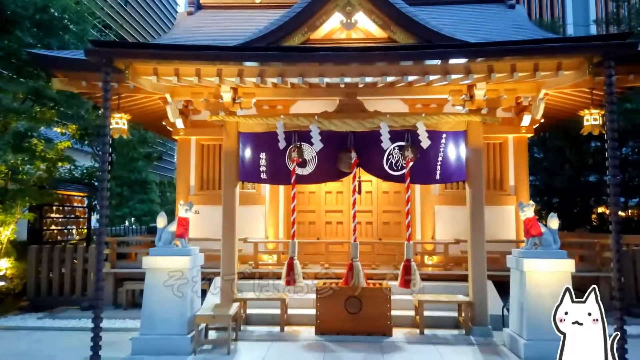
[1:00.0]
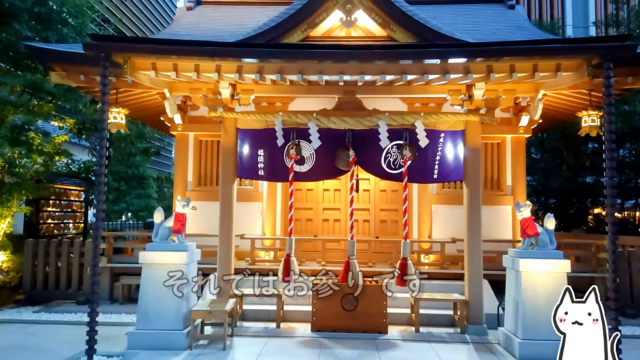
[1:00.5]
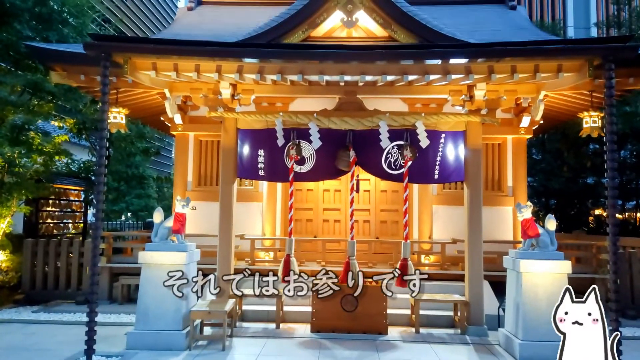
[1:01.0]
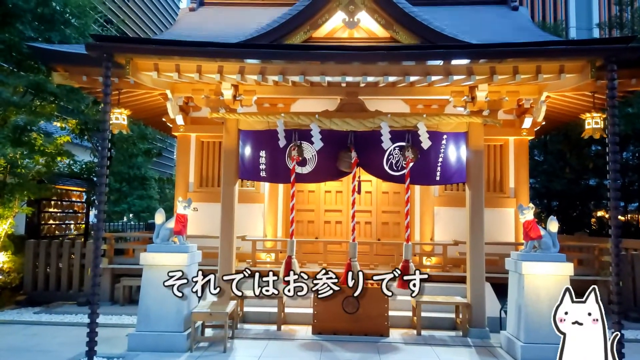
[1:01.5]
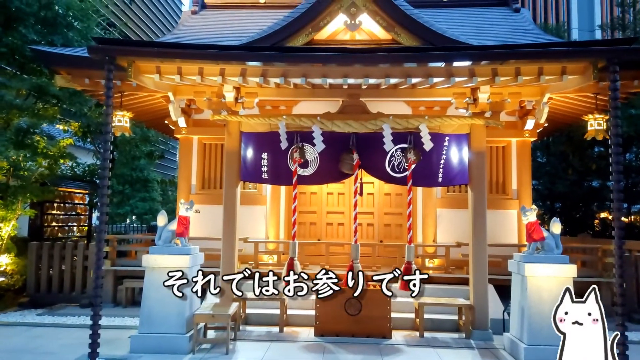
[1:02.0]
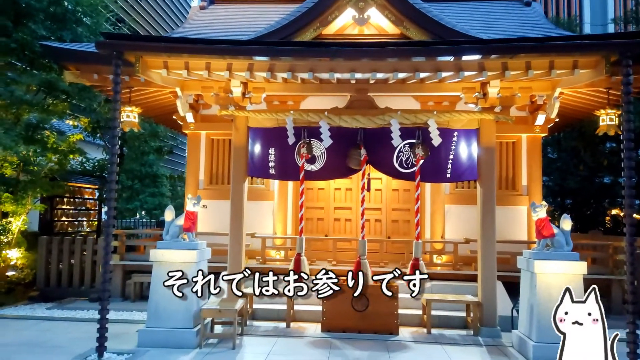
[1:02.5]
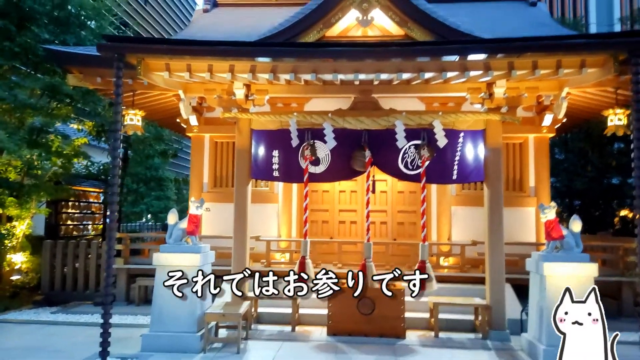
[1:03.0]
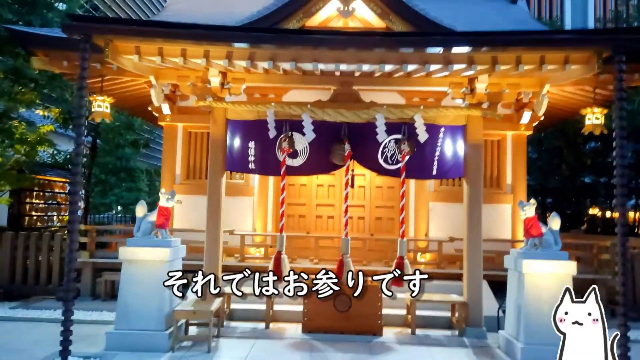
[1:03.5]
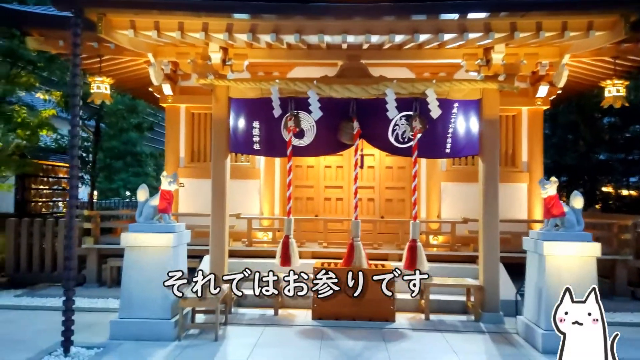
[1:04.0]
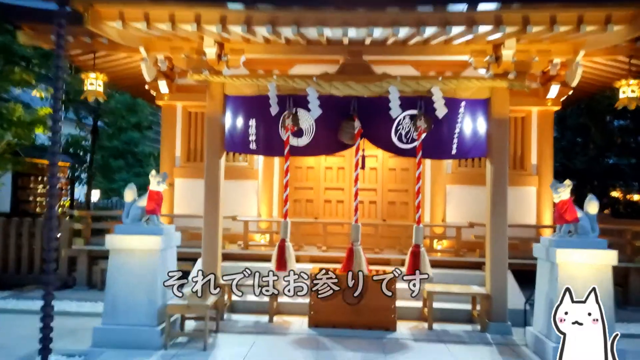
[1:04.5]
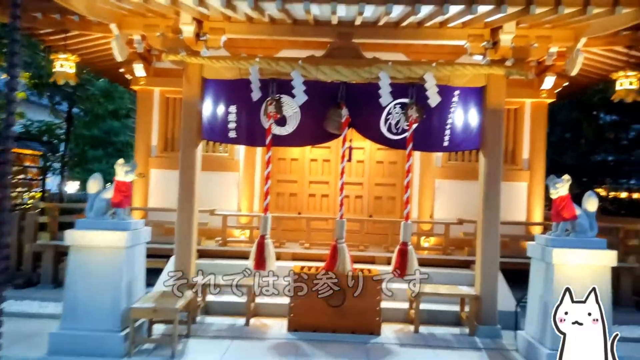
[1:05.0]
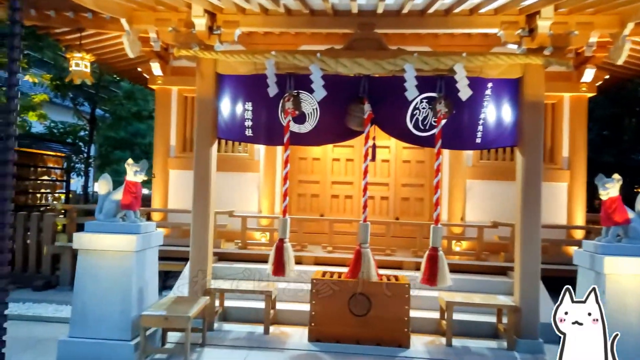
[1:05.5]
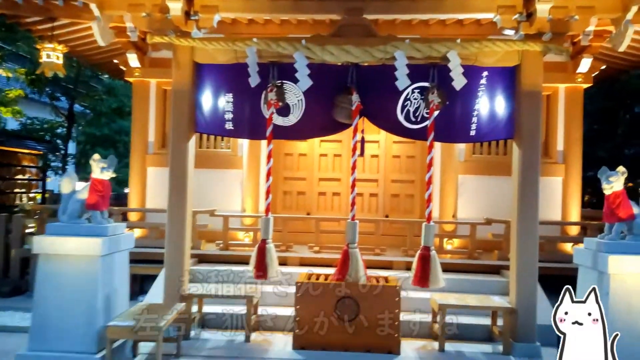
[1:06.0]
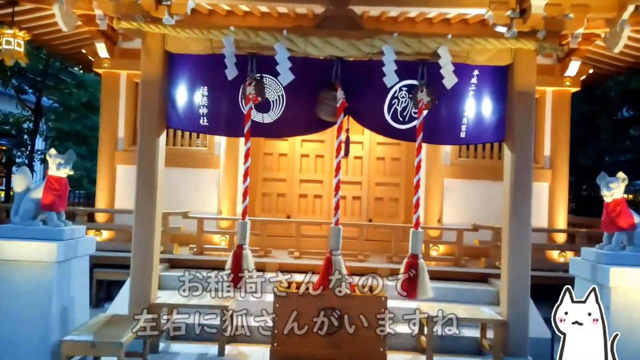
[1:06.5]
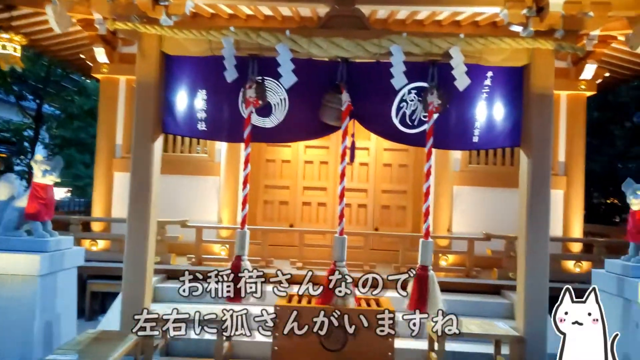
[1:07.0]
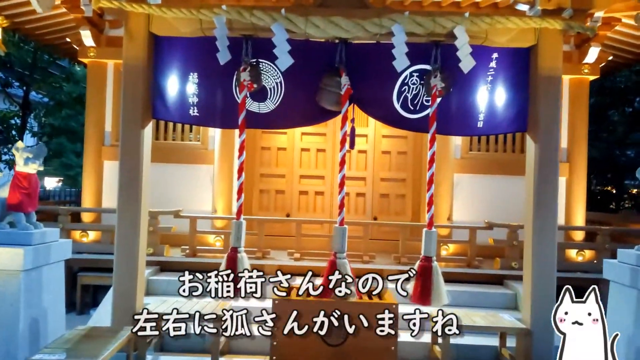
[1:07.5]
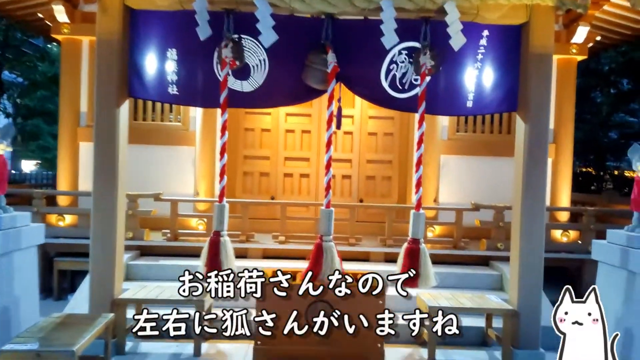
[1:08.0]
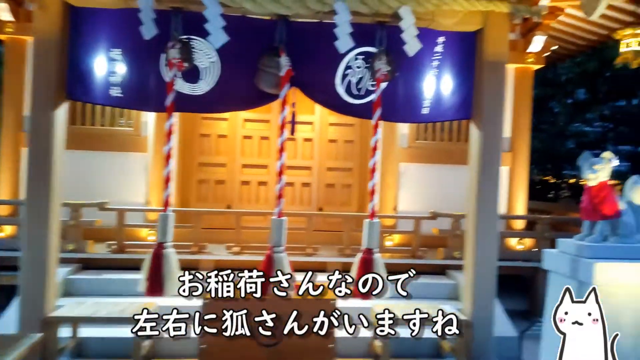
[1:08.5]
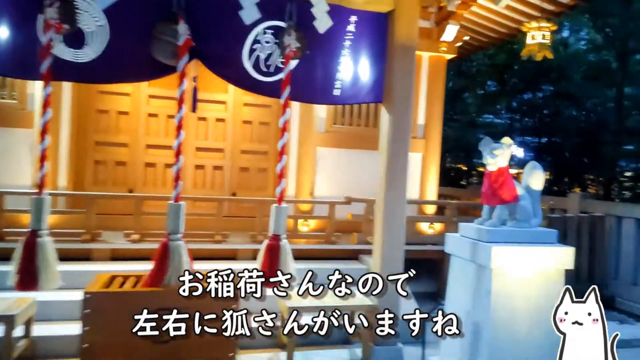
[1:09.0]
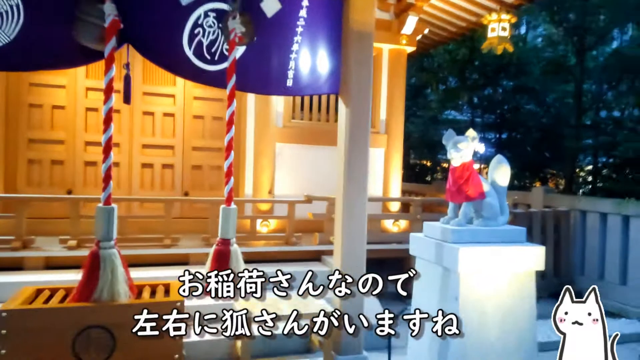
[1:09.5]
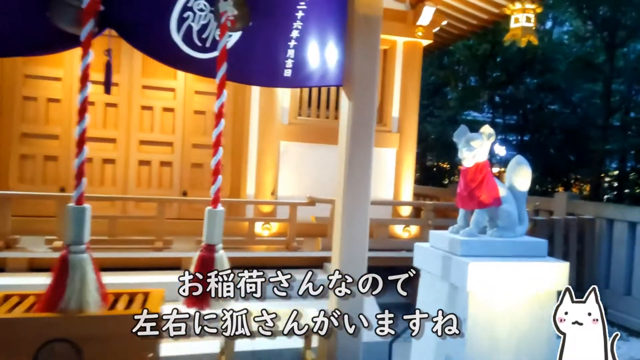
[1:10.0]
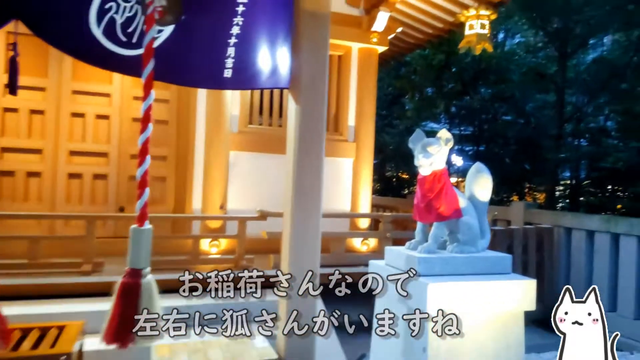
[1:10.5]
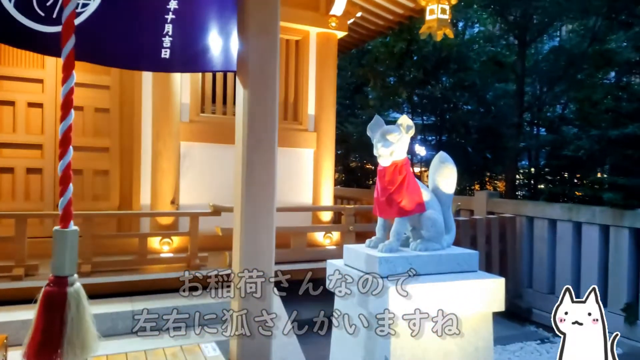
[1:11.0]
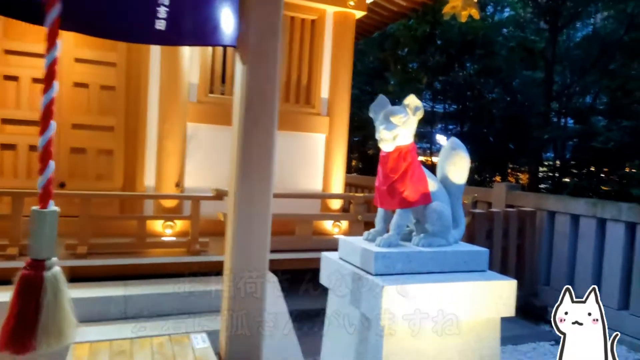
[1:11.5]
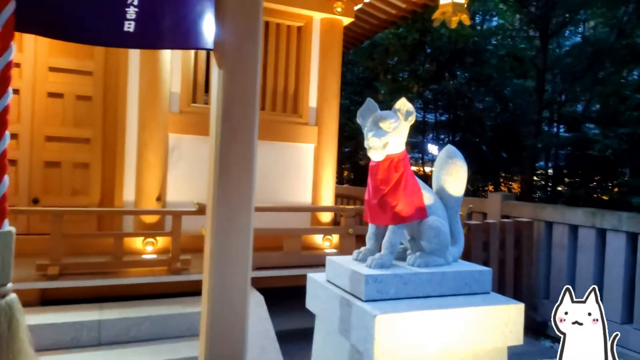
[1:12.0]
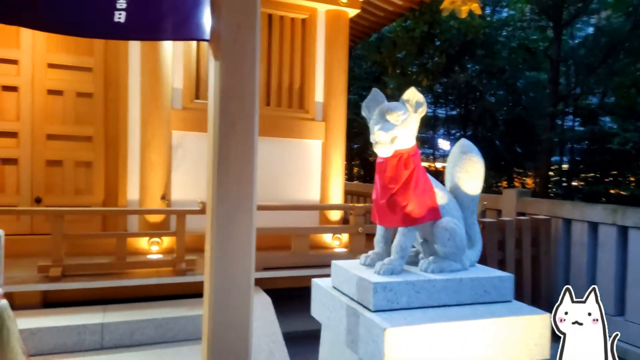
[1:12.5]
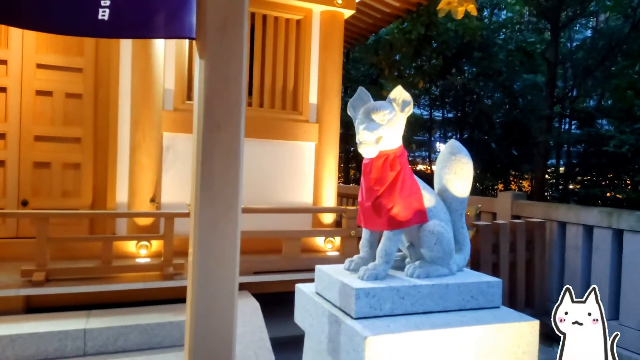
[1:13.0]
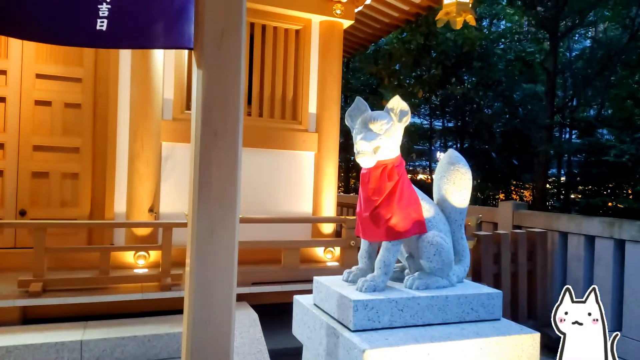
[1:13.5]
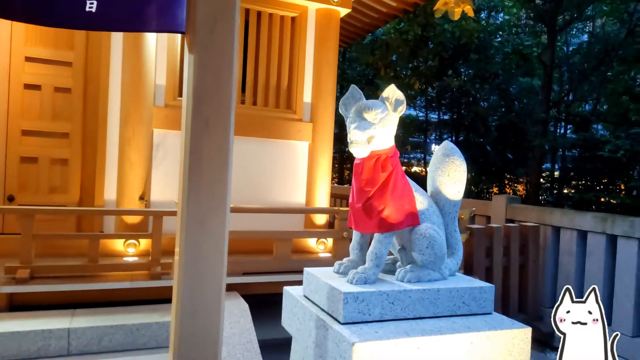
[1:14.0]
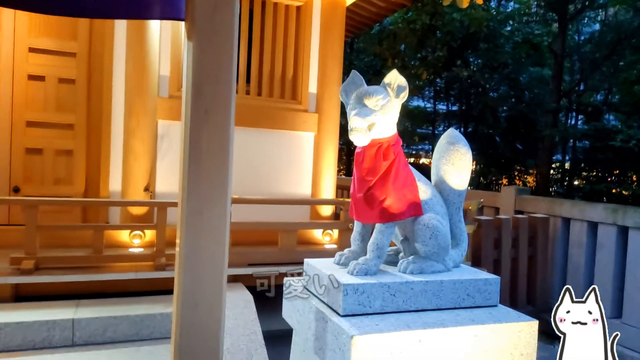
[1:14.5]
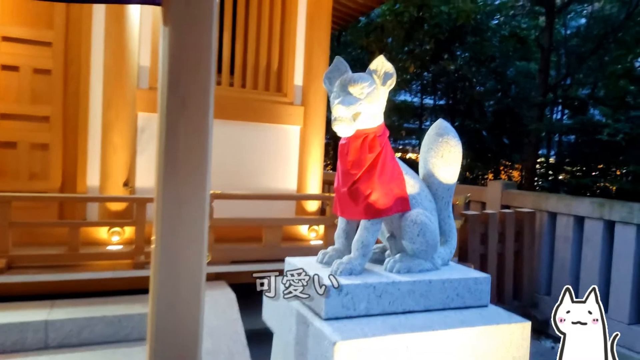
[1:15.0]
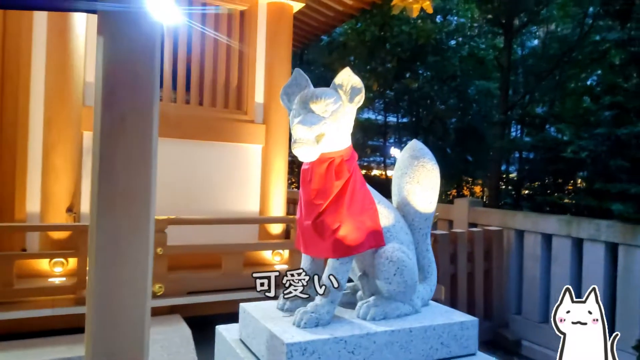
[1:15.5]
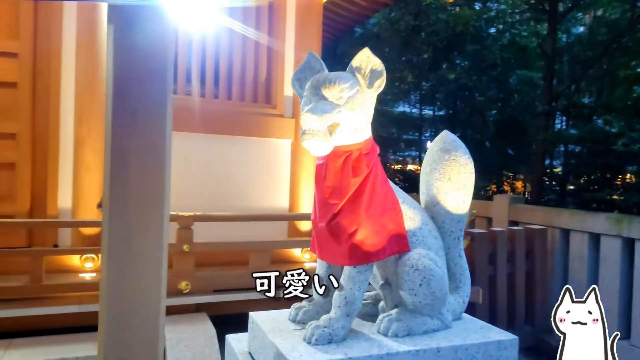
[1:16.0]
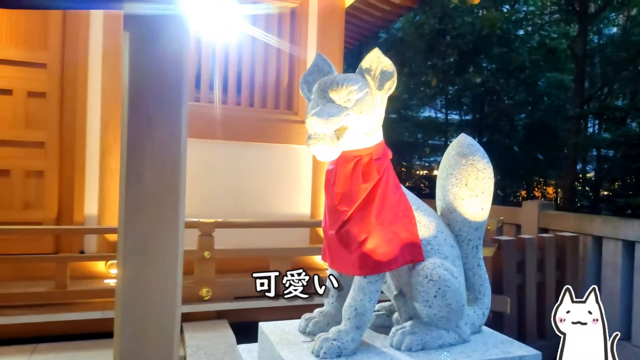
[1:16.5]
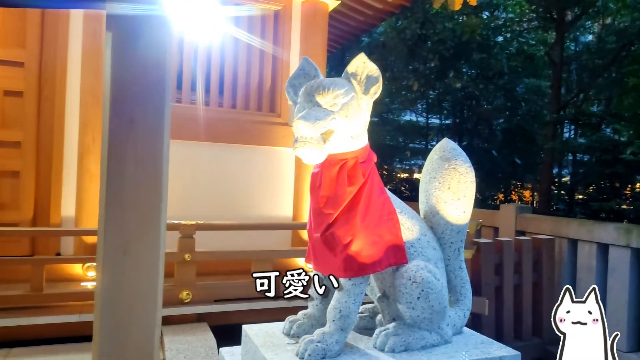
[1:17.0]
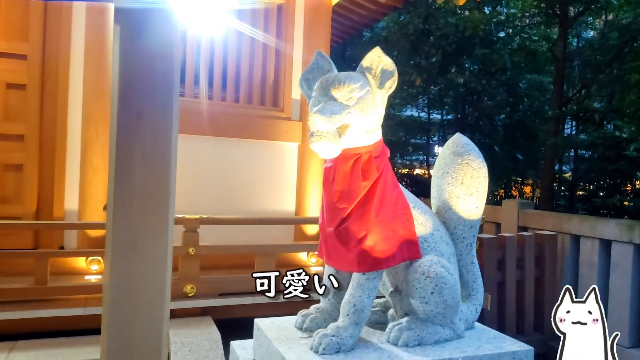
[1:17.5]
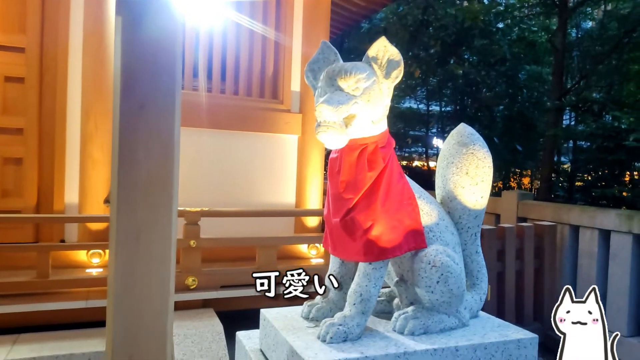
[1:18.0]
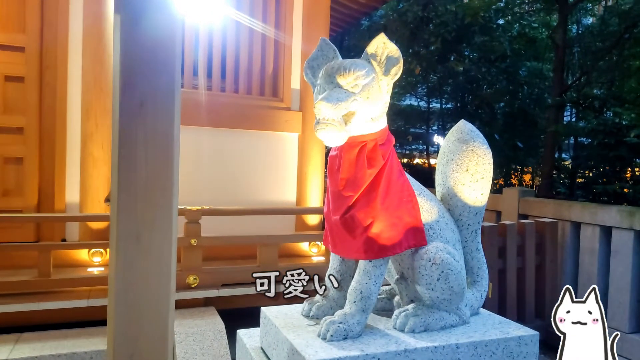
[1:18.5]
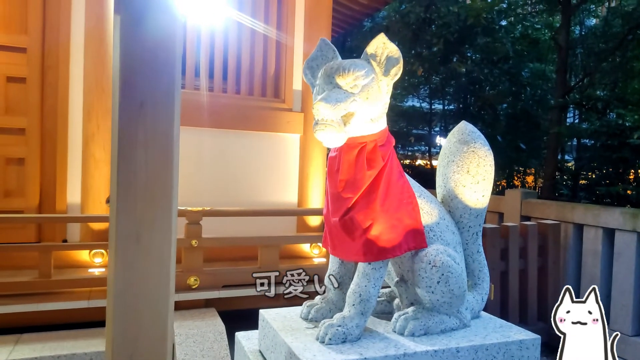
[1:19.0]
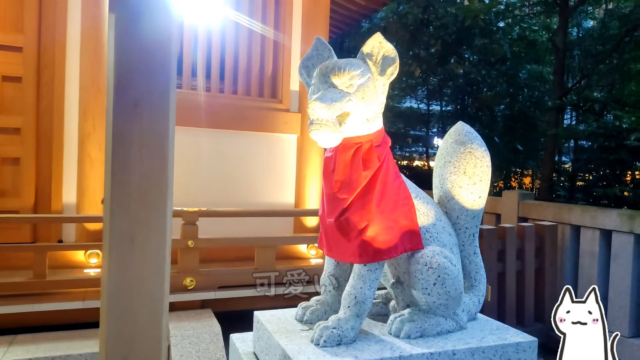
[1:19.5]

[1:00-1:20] The observer moves up close to the gazebo in the center of the raised display. Two cat-like statues stand one on each side of the gazebo, each mounted on a stone pillar. Both cats are growling and looking toward the front of the gazebo. They both wear red capes around their necks that look like dinner cloths or dinner napkins. Two navy flags hang over the front of the gazebo about one-third of the way down. There are three red and white twist rope structures, each with a red and white tassel hanging at the bottom. Four paper lanterns hang in the front of the gazebo. The gazebo is very ornate, with electrical lighting mounted under its roof and in its front. The doors look like they have two panels each, so there are four panels in the front. There is a window on the right side and on the left side in the front, both vented and made of slatted wood. There appears to be a fence about one-third of the way up the gazebo, behind it. Office buildings and condominiums are in the background. Three steps lead up to the front of the gazebo, possibly auditorium seating. A stone fence also surrounds the sides of the gazebo, and two ornate lanterns hang on each side of it.